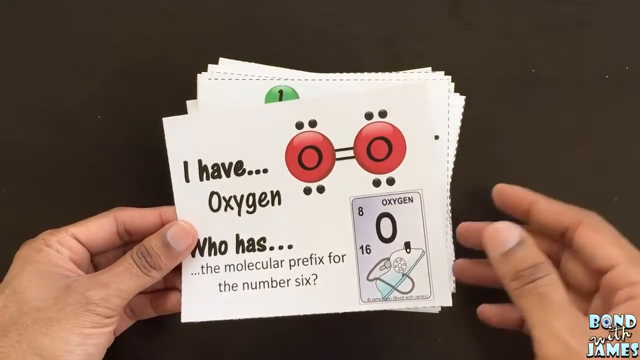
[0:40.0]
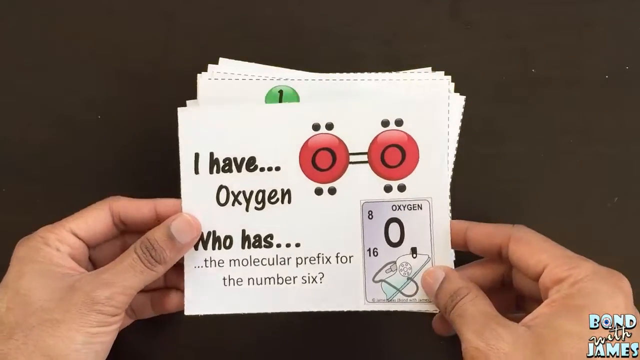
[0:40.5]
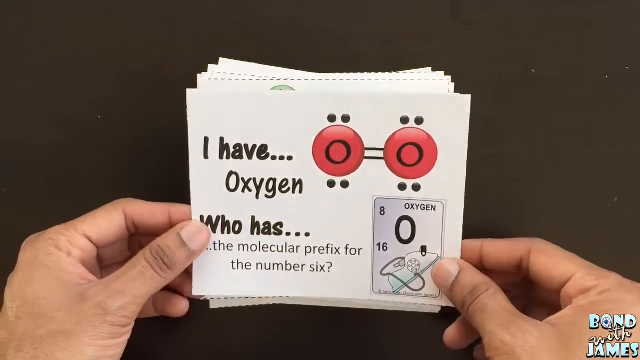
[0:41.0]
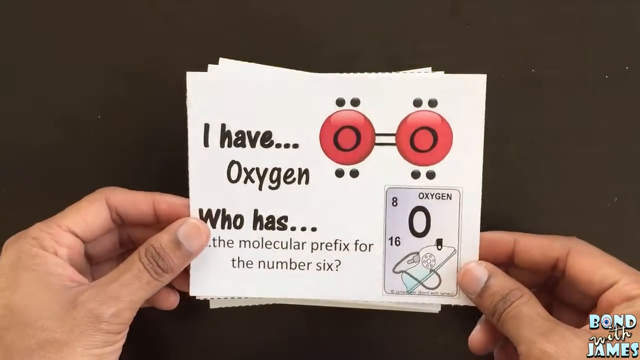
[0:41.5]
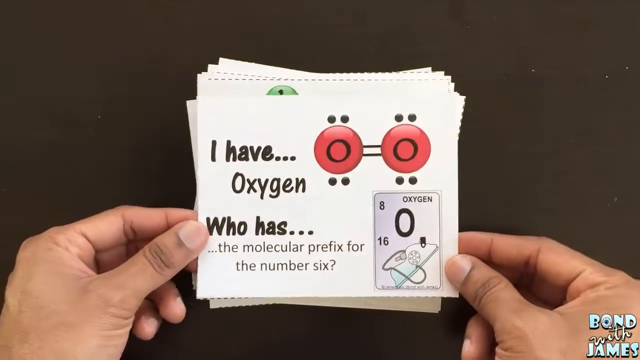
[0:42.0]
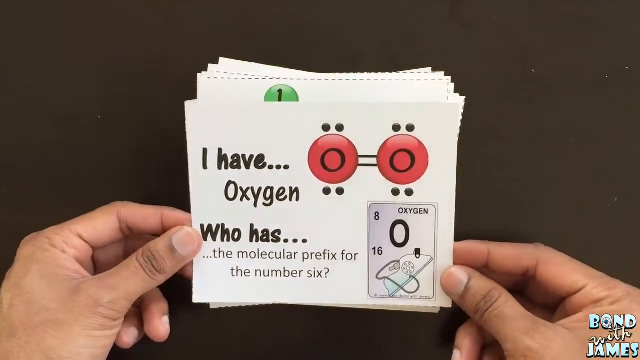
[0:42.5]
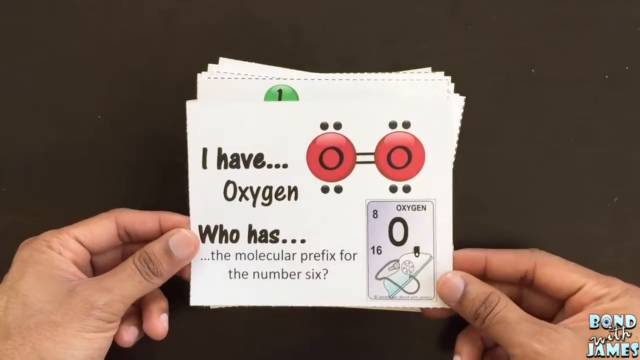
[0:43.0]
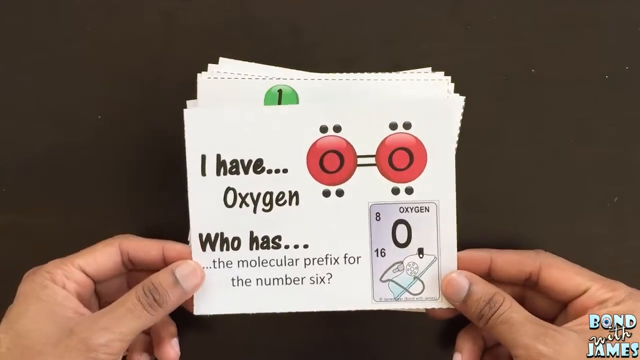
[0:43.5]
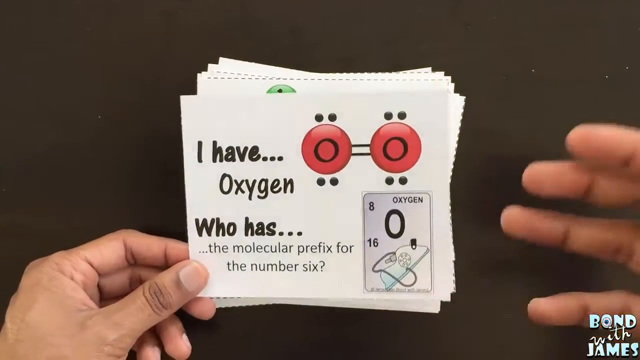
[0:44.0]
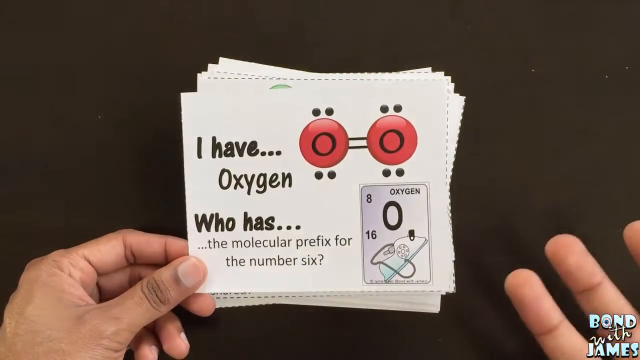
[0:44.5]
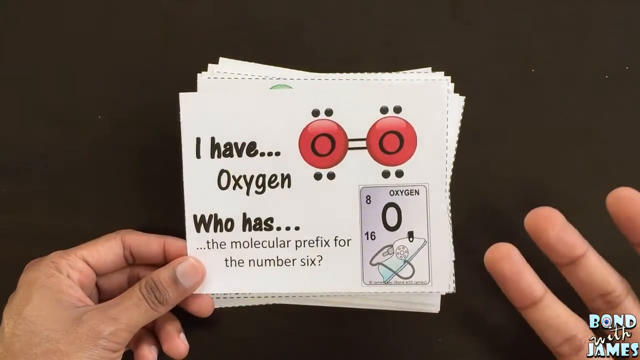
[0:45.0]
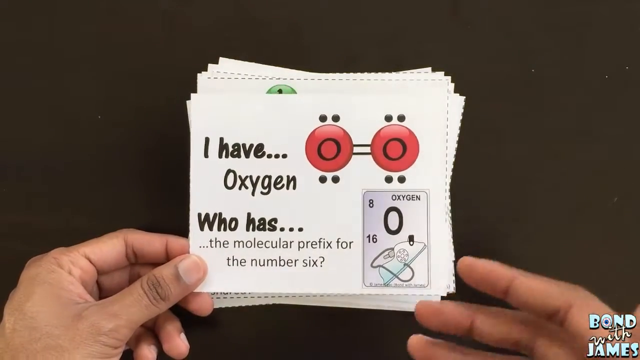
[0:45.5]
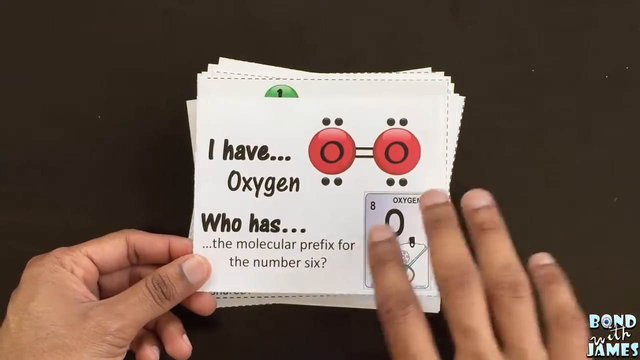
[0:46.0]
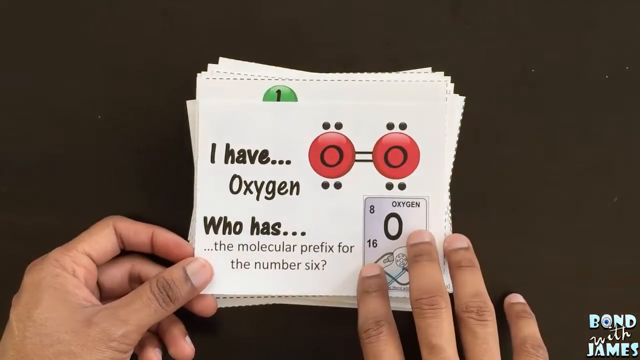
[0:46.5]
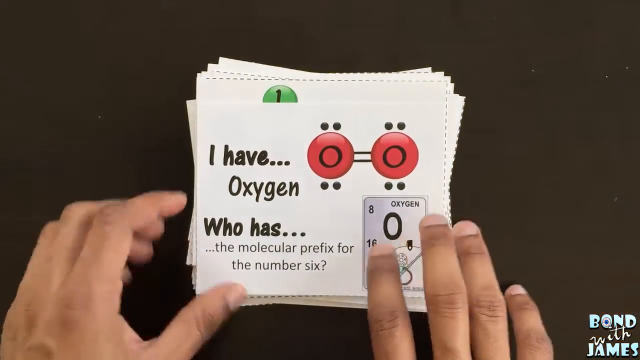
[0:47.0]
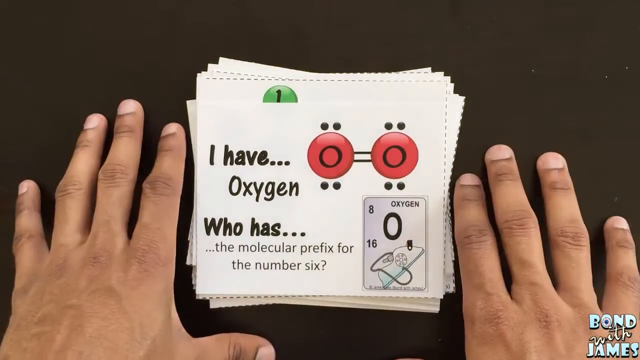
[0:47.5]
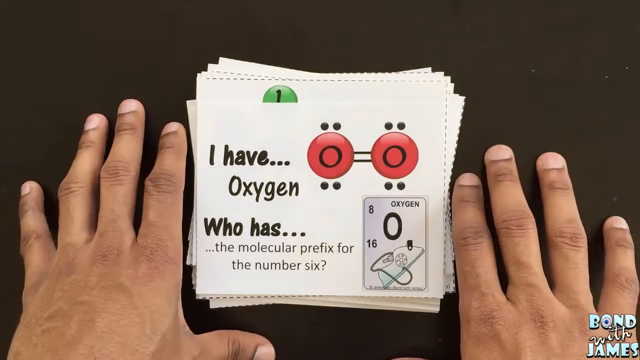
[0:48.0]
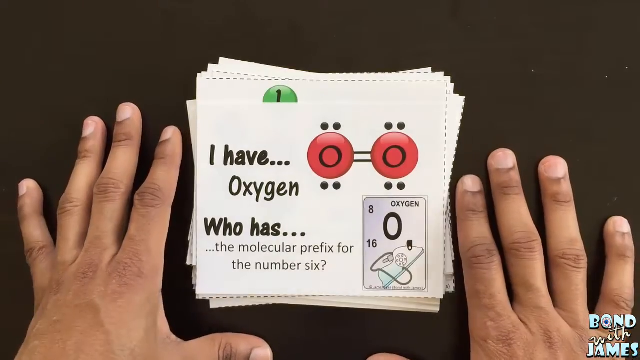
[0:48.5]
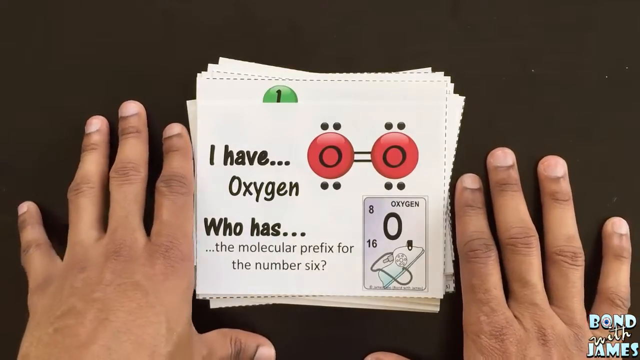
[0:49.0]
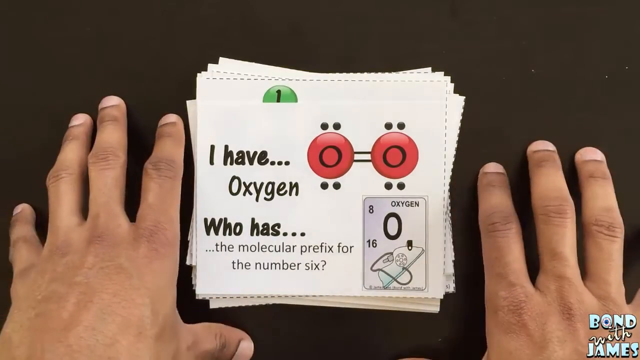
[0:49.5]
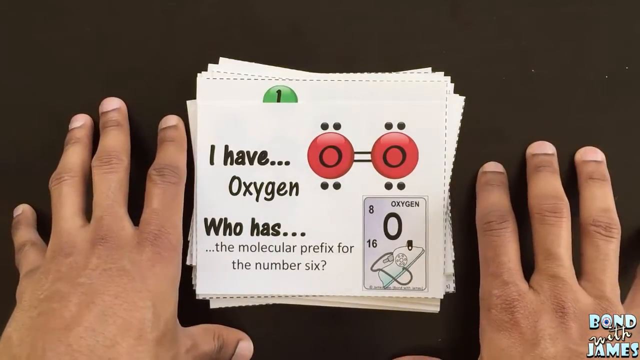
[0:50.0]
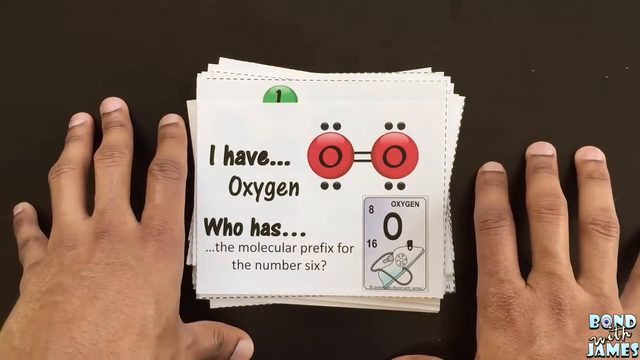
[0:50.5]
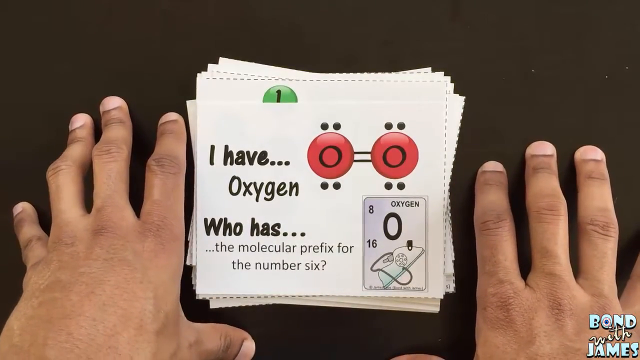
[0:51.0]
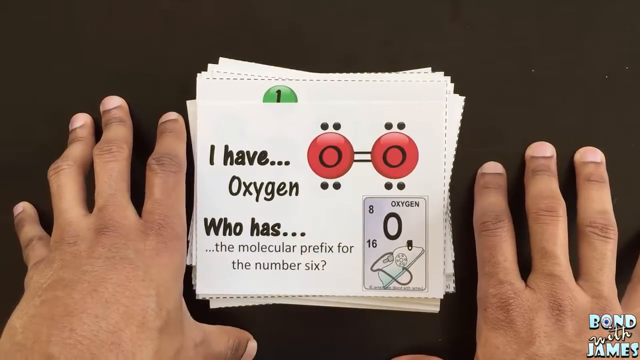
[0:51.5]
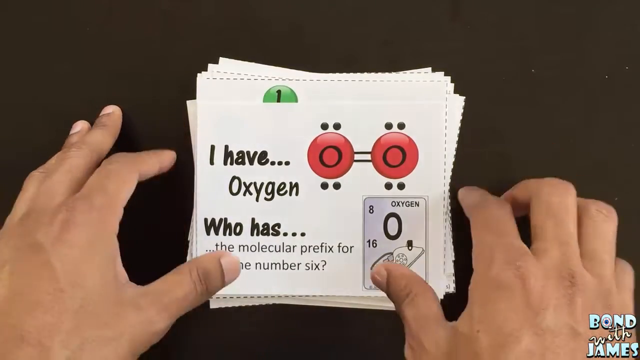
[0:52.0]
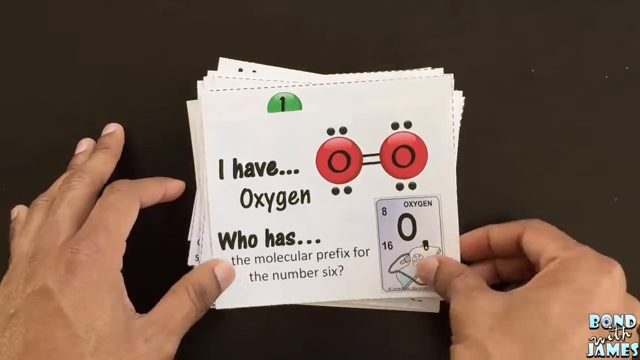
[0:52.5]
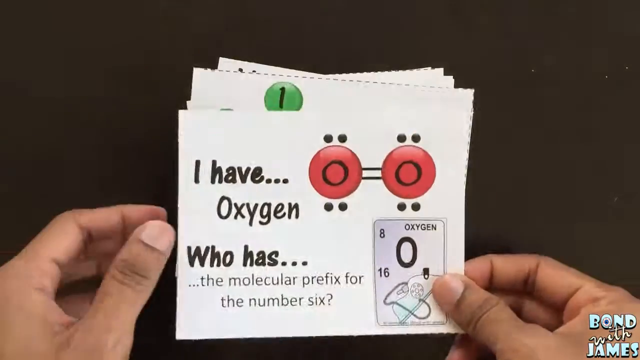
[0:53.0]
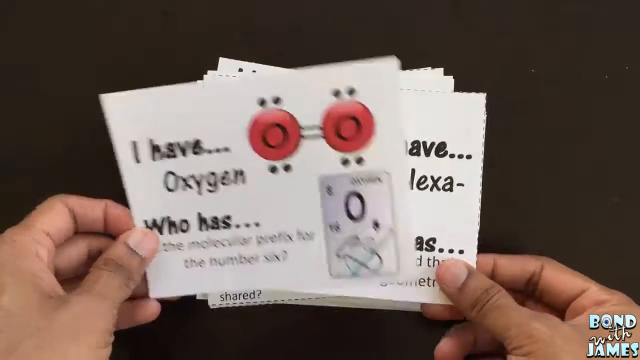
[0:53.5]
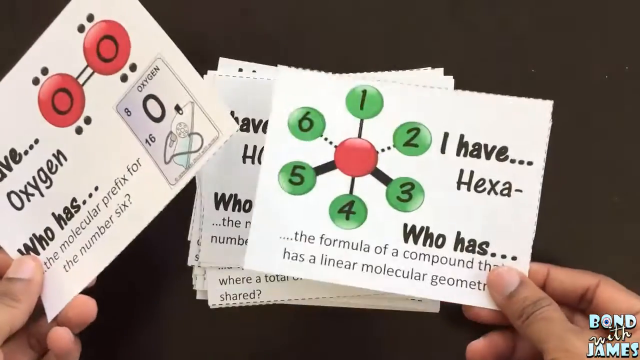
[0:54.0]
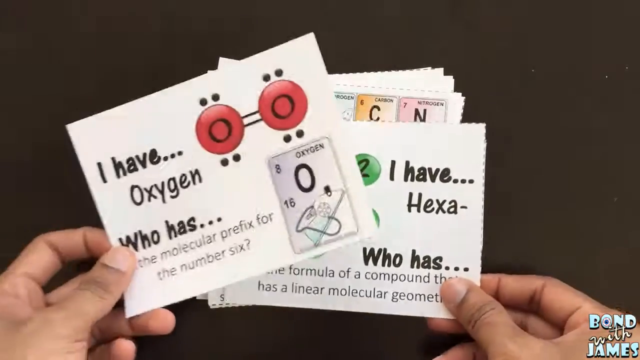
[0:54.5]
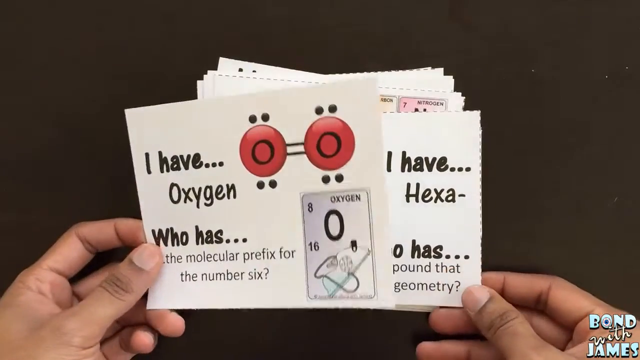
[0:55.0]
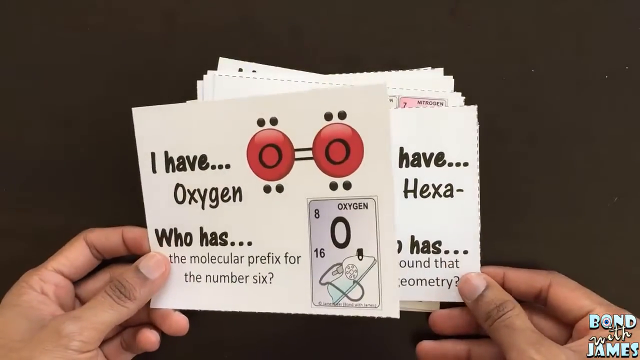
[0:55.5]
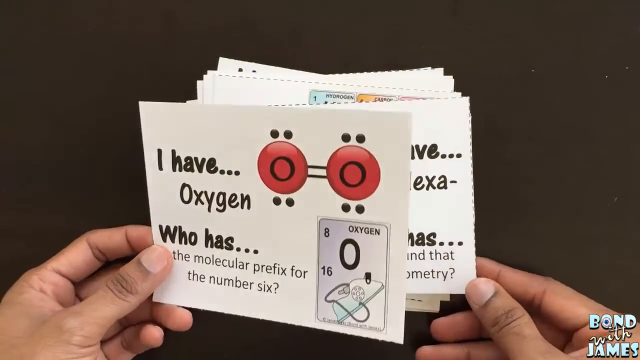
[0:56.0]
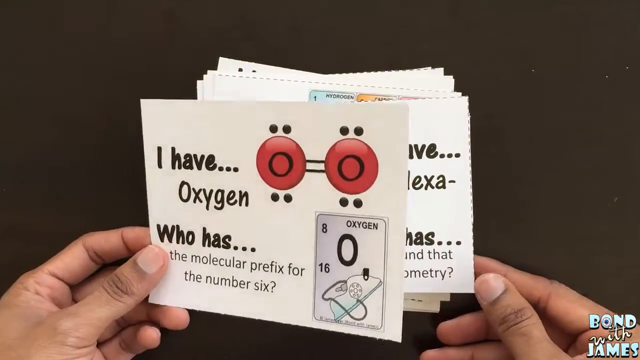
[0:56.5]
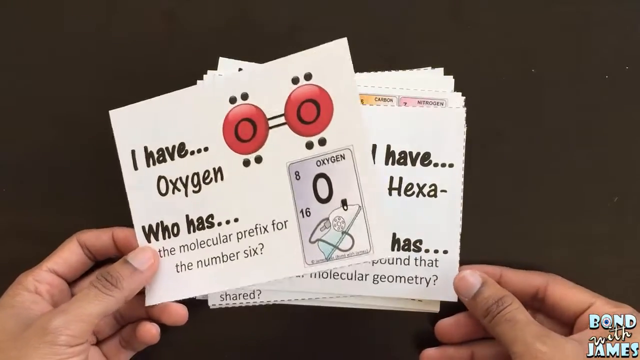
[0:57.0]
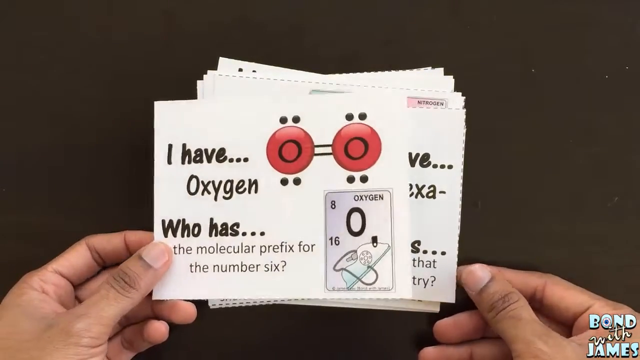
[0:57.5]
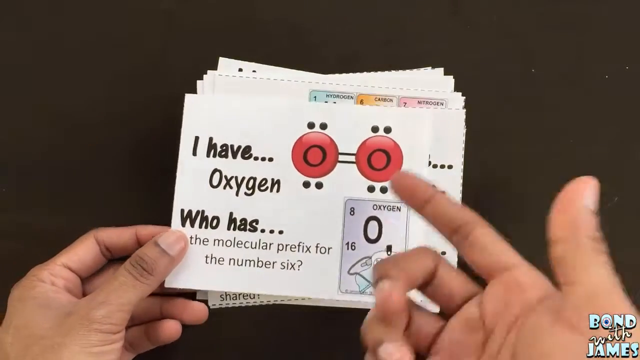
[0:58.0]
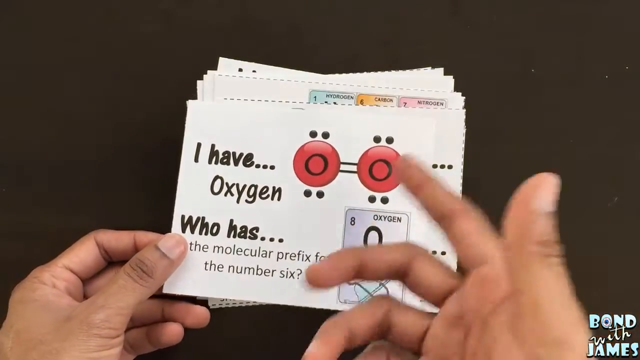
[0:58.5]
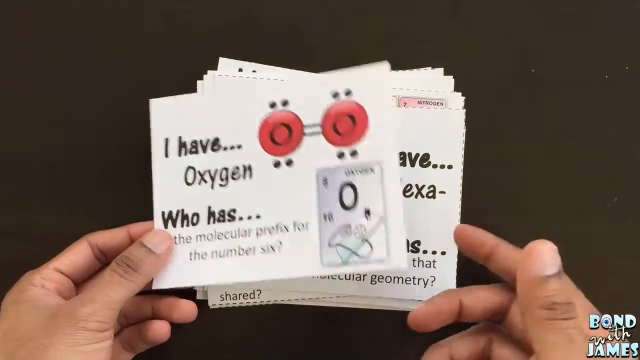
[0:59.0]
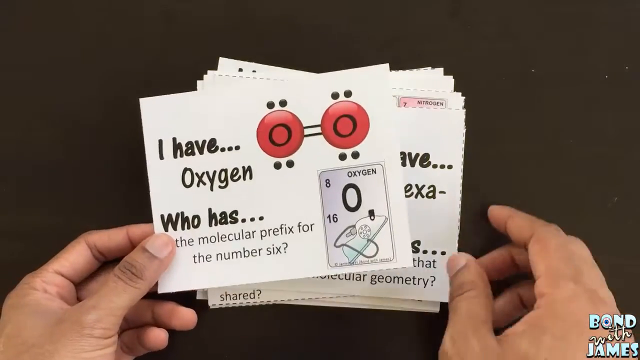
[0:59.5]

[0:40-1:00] The person's hand rests properly on the table, then picks up a card reading "I have oxygen" with molecular pictures on it and the text "who has the molecular prefix for the number six." On the card is another box that looks like a card, with oxygen written as a big letter O, the figures 8 and 16 beside it, and another picture. After picking this first card, the person picks up a second card, which is green and also has a prefix: it reads "I have hexa." It is not shown well, but "linear molecular geometry" can be read on it. The person keeps making gestures with their fingers while flipping the first card they are holding.